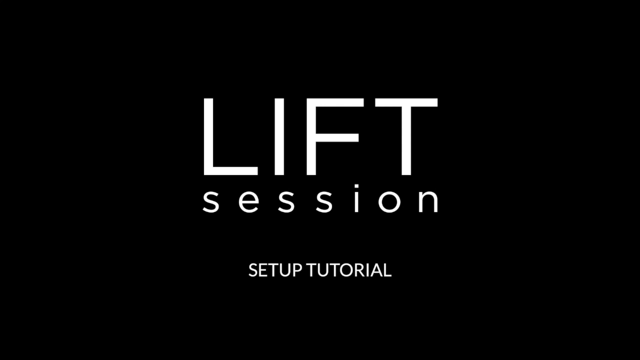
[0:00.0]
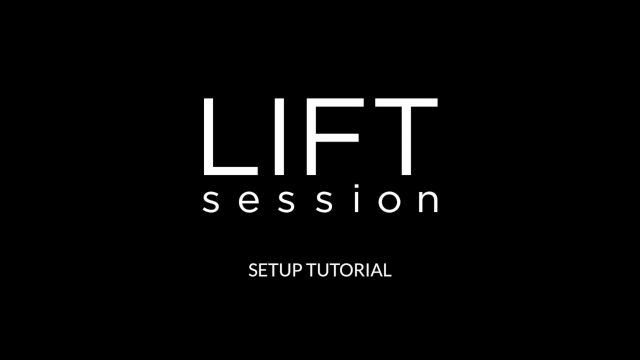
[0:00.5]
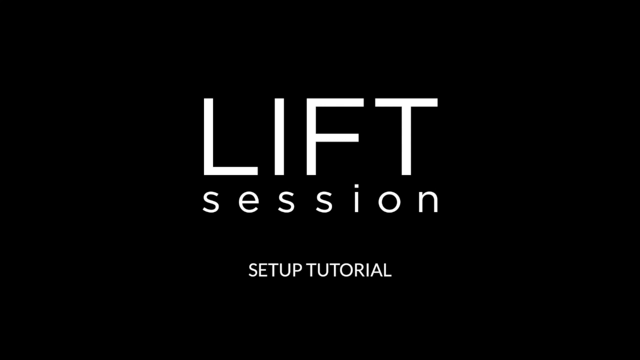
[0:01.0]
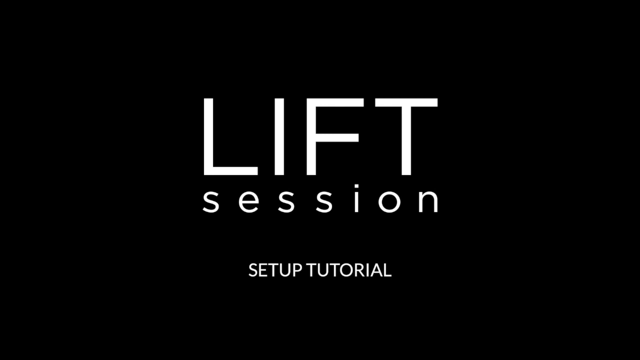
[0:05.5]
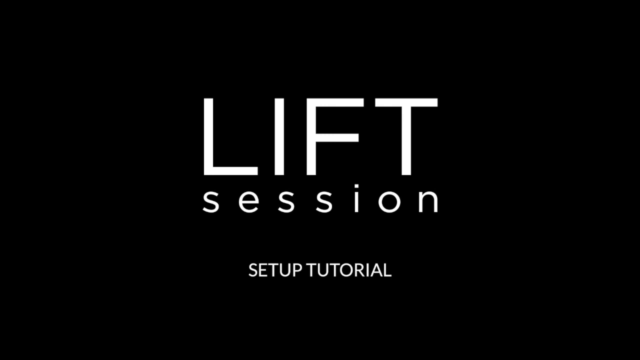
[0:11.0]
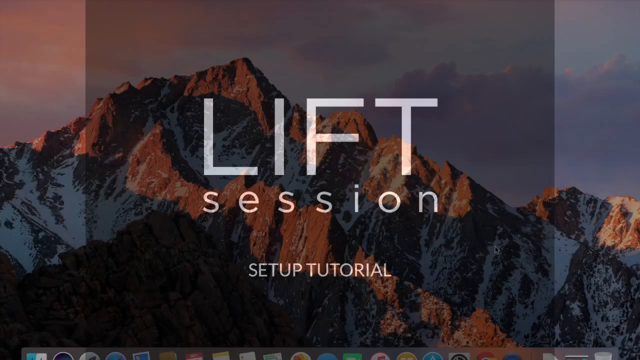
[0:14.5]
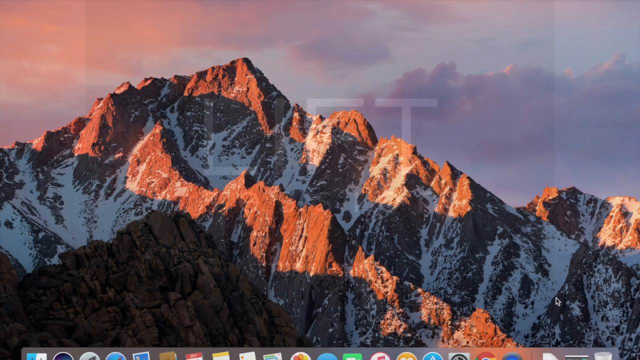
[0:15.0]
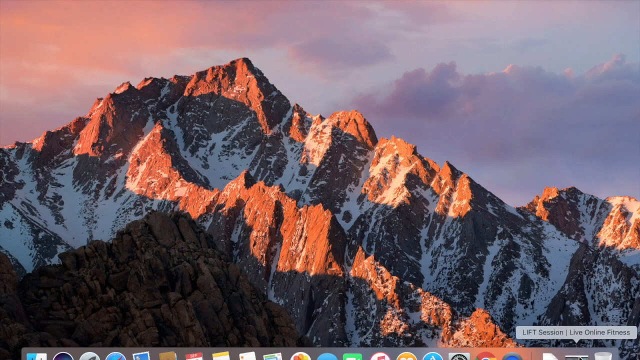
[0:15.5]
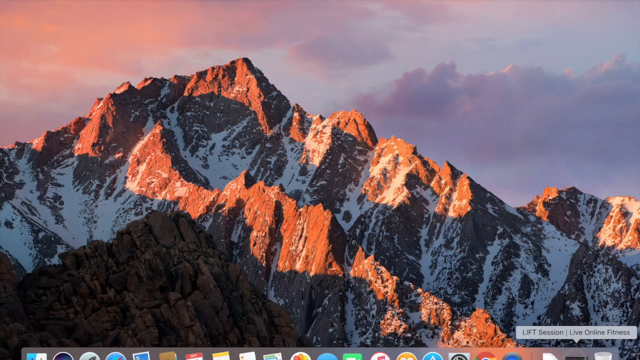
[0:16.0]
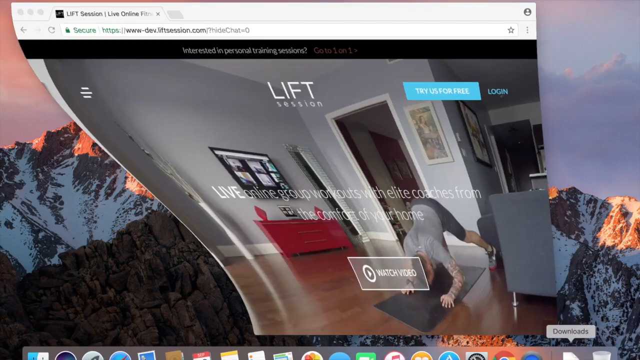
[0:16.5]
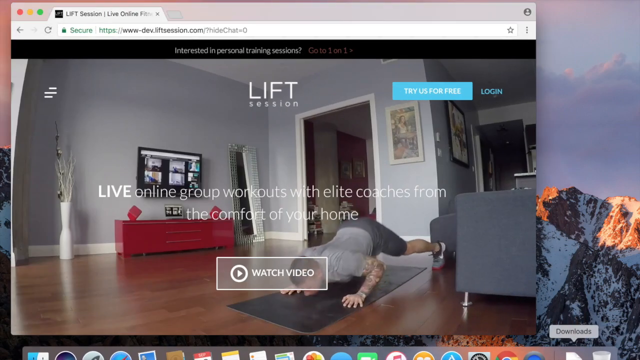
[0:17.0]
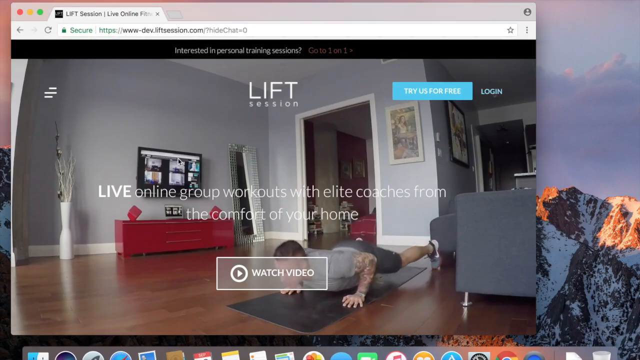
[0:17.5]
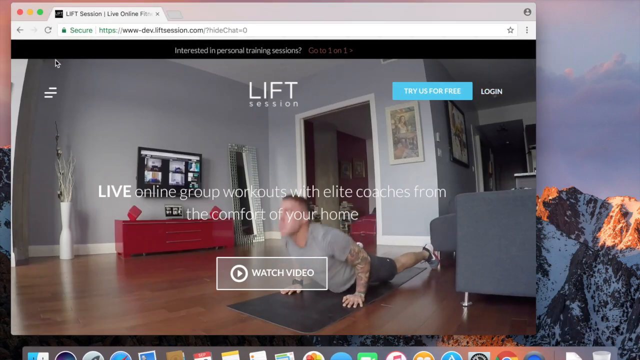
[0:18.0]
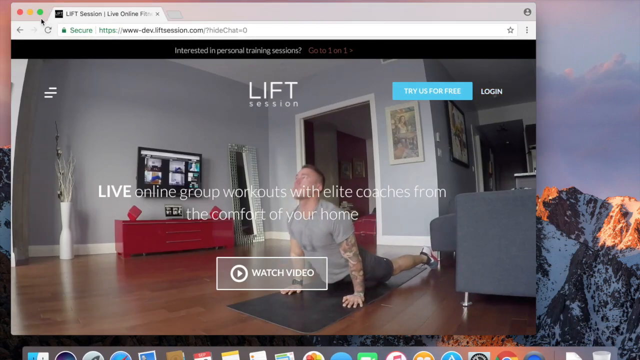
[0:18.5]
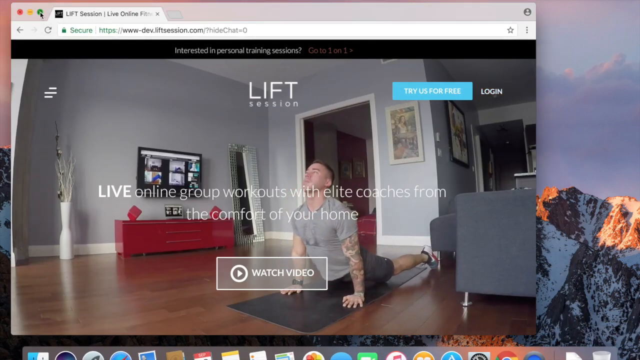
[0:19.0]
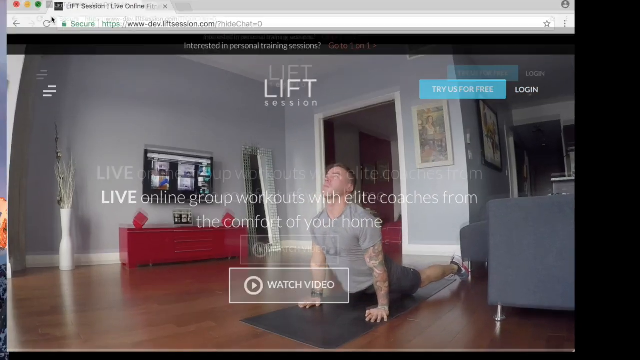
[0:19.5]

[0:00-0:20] Against a black background, white text in the middle reads "Lift," beneath it "Session," and beneath that "Setup Tutorial"; "Lift" is the largest text, followed by "Session," with "Setup Tutorial" the smallest. The video fades into a photo of a mountain range in evening light with clouds in the background. A webpage titled "Lift Session" appears on the left side of the video, coming in from the bottom right. The webpage's background is a photo of a man facing left, wearing dark grey shorts, over a grey mat on a wooden floor in a very comfortable-looking home. His arms and legs are bent and his stomach is almost touching the mat as he looks ahead. At the top of the webpage it says "LIFT Session," and on the right is a blue button reading "Try US For Free," with blue text reading "Login" to its right. In the middle of the page, white text reads "LIVE online group workouts with elite coaches from the comfort of your home." A grey button at the bottom reads "Watch Video" with a play symbol to the left of the text. The man lowers his legs, pushing his back straight and up and tilting his head back while keeping his arms straight down. The video zooms in on the webpage.